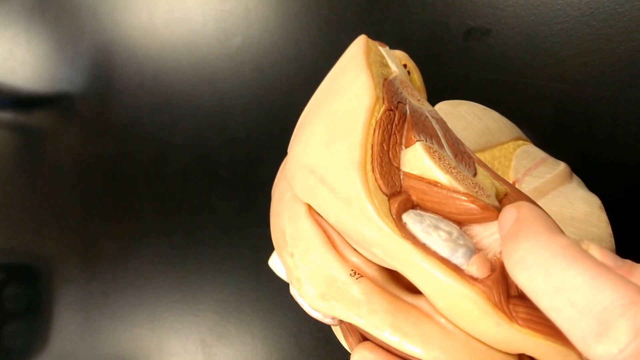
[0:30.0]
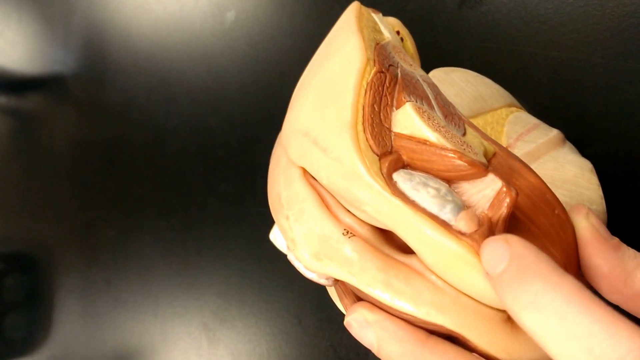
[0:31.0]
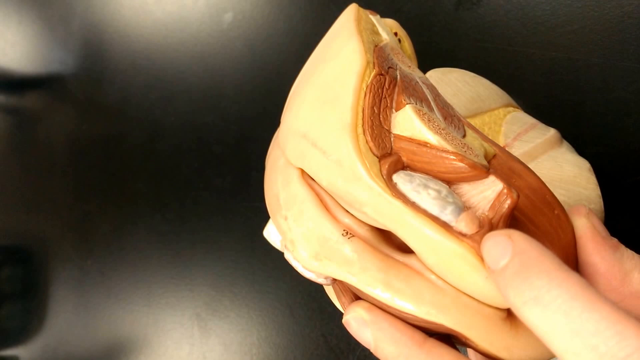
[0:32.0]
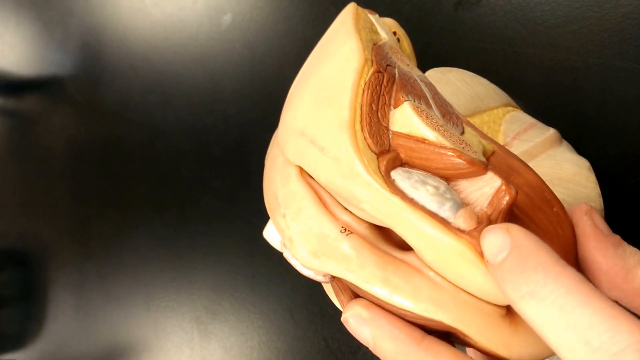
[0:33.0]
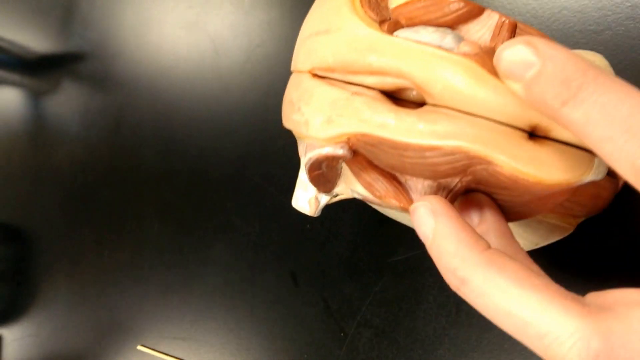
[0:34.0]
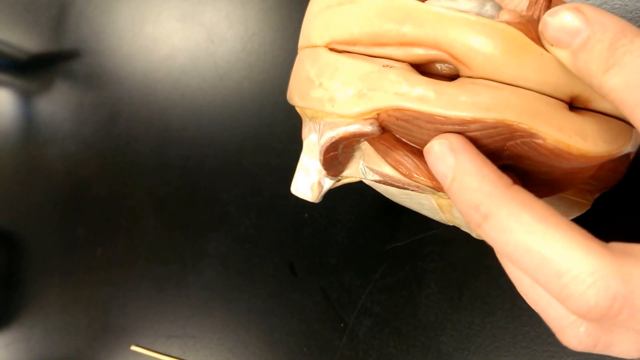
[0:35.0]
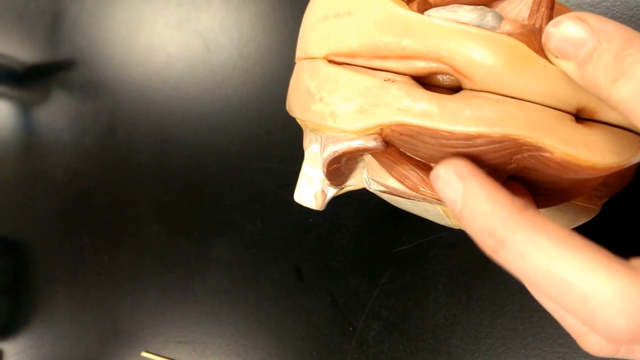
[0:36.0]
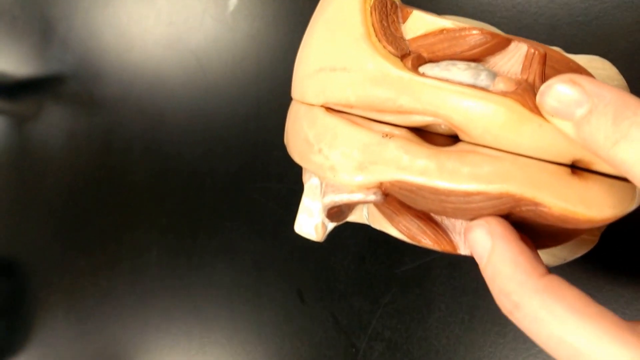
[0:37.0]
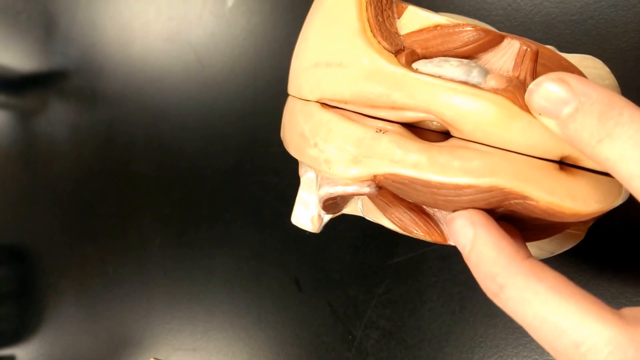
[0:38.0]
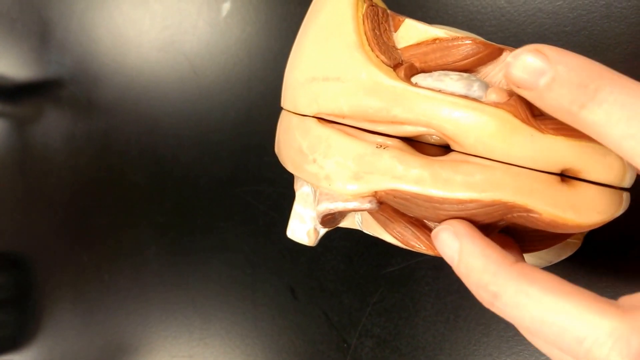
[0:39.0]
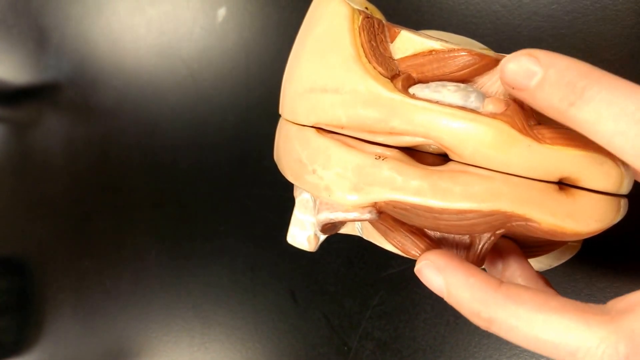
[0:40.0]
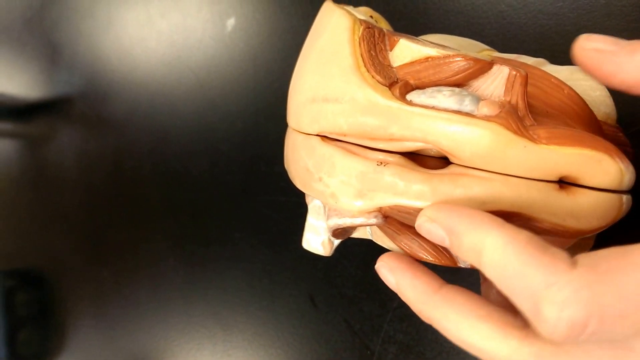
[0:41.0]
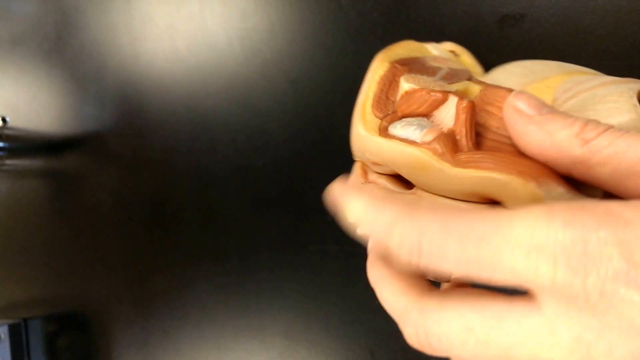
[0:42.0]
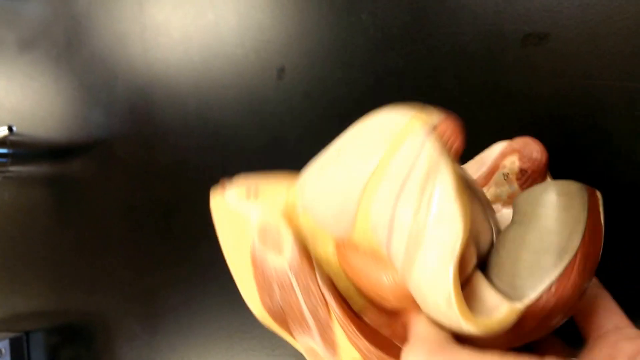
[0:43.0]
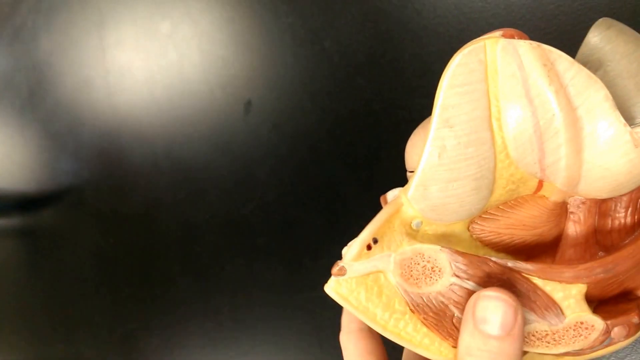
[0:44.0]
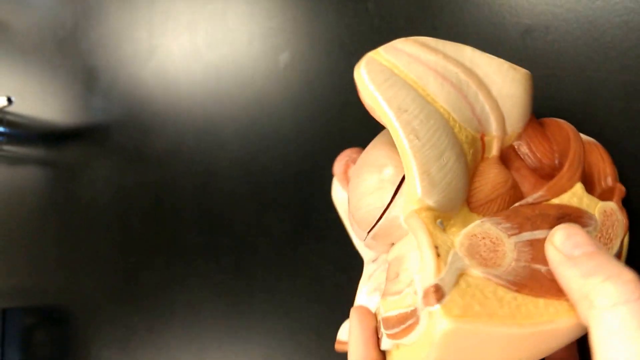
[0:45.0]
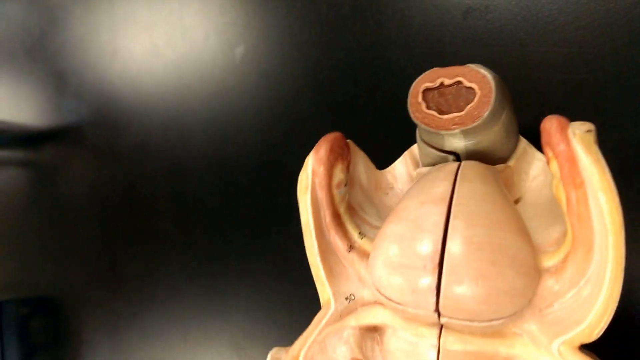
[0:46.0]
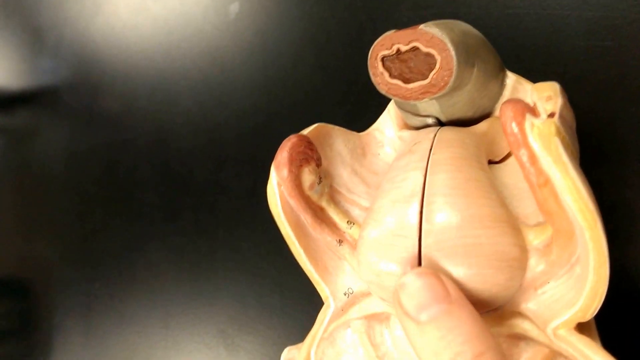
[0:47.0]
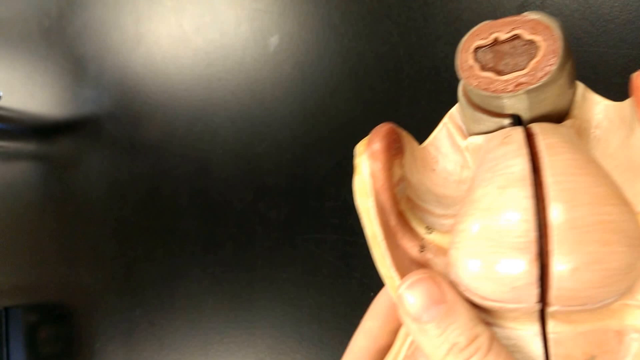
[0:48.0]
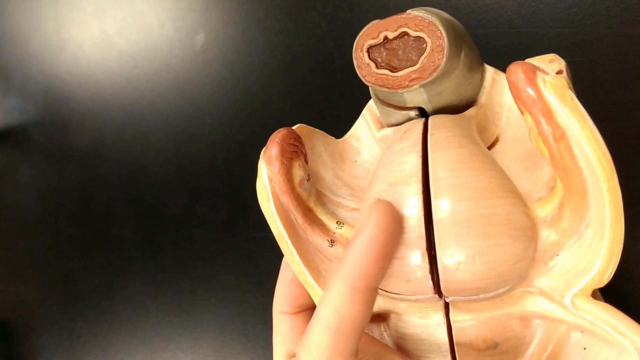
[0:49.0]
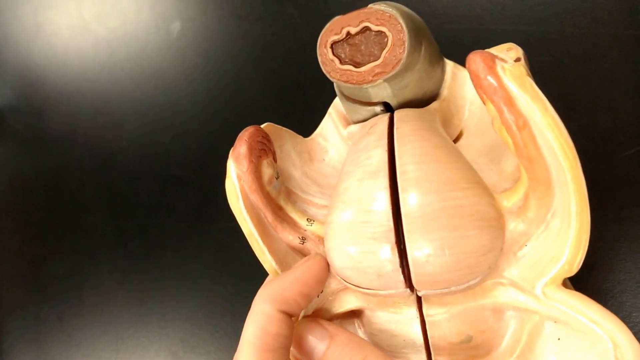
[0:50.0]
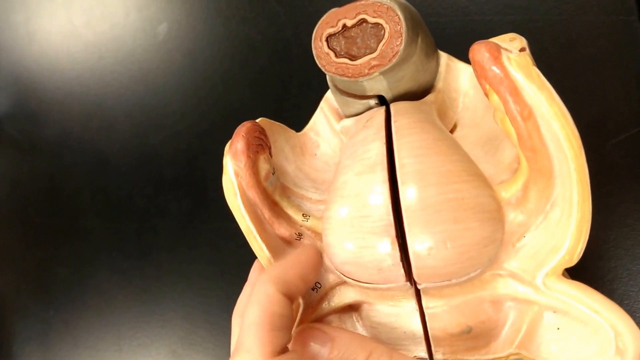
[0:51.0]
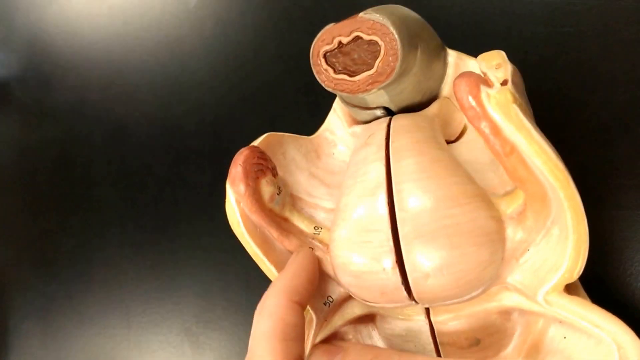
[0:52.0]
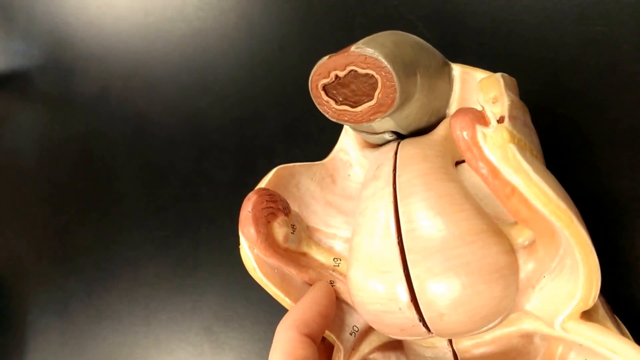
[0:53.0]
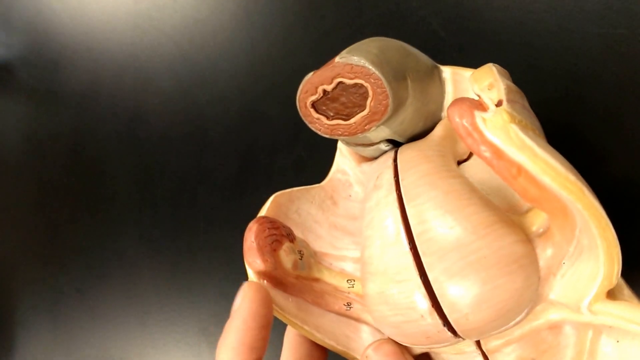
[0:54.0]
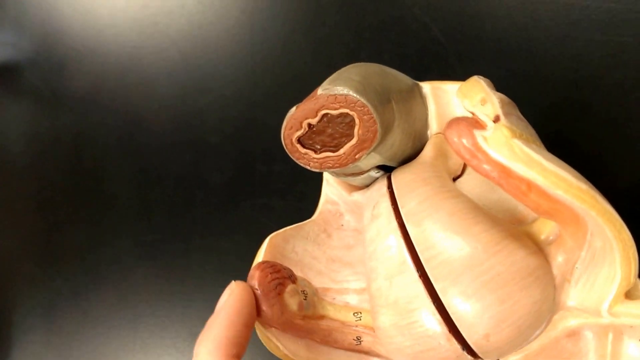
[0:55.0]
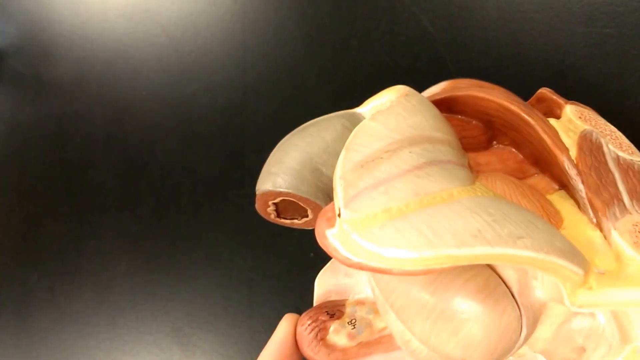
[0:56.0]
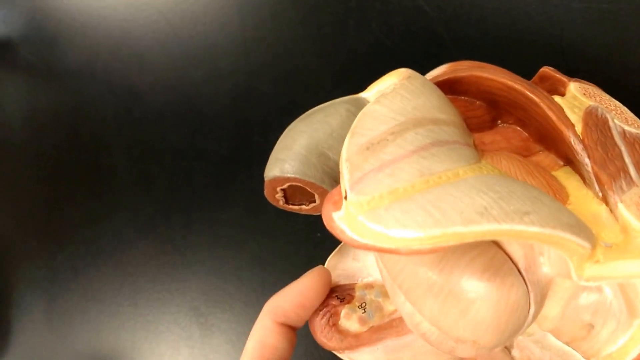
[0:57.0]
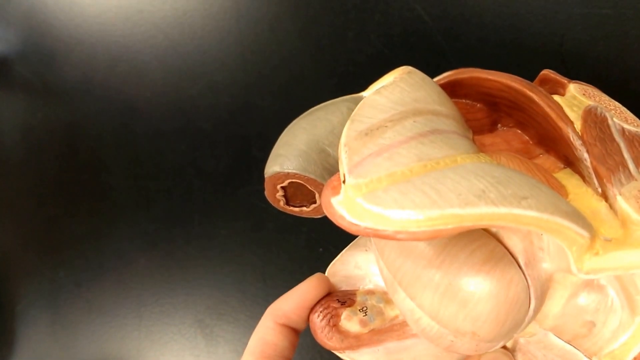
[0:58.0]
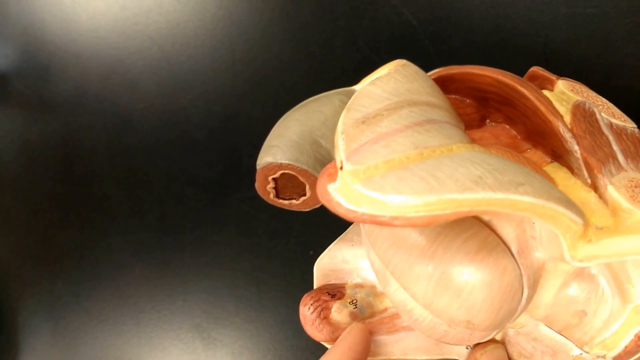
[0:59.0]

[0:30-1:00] Someone holds, in their left hand, a model of a human vagina and anus with the various muscles and organs behind it, over a semi-reflective black table. They hold it with the skin and the opening of the vagina toward the camera and use their index finger to point out a white mass to the right of the model, then their middle finger to point out that the other side of the model is different. They flip the model to its right side and then to its back side. With their index finger they point out a large sac on the back of the model, then rub their finger against and tap a red hook-like tube as if explaining what it is. They also point with their index finger toward a white fatty mass next to that tube.